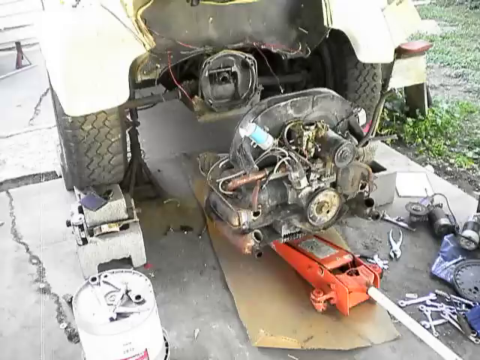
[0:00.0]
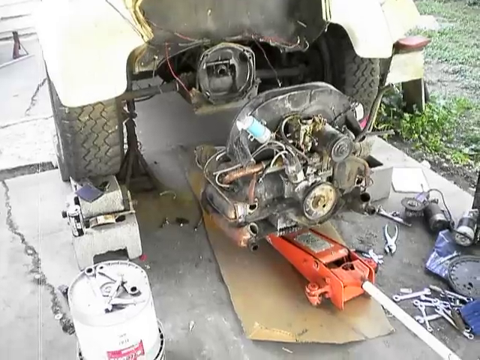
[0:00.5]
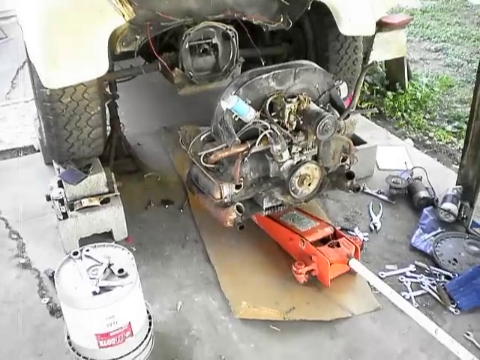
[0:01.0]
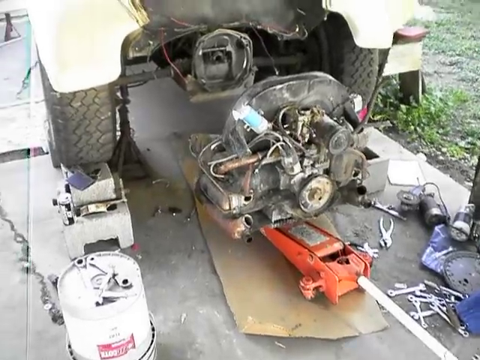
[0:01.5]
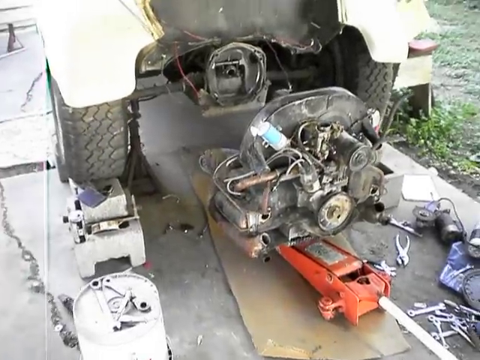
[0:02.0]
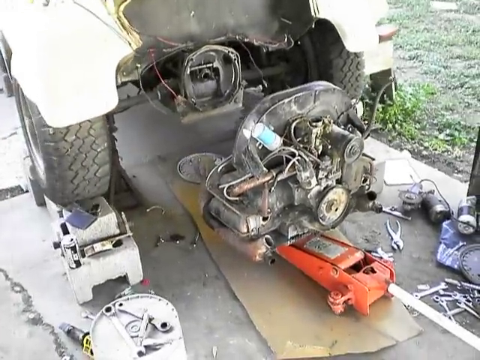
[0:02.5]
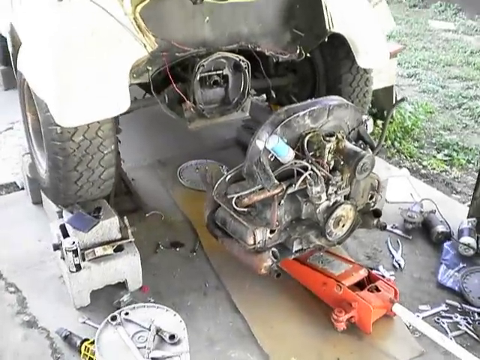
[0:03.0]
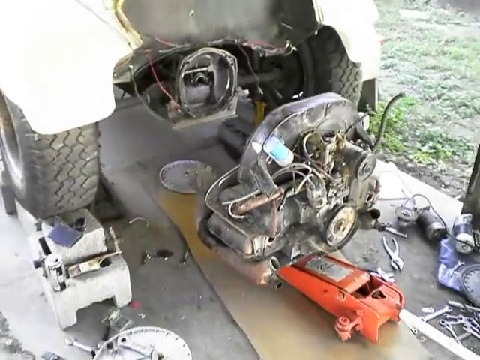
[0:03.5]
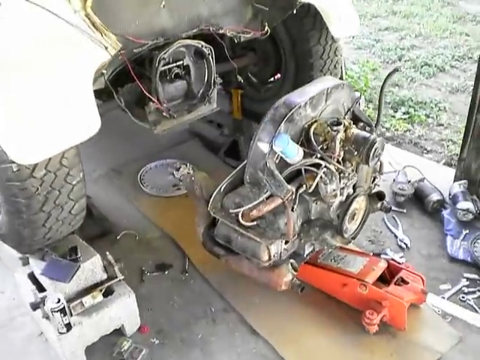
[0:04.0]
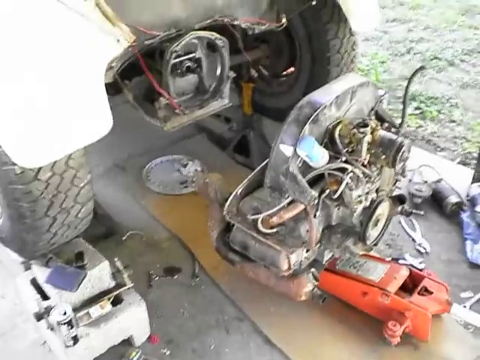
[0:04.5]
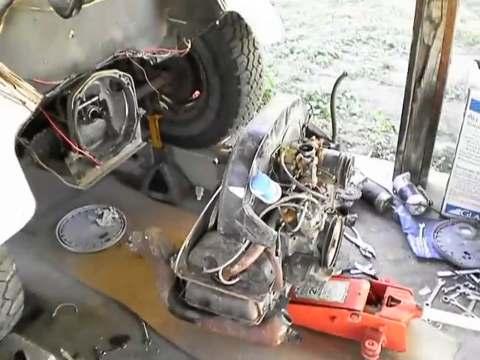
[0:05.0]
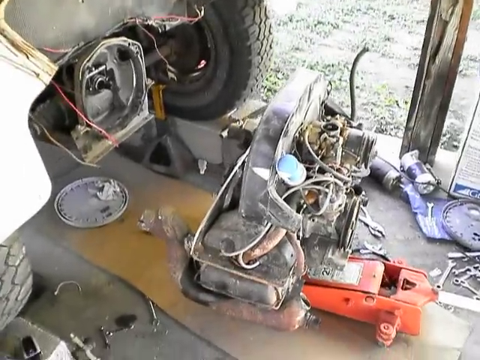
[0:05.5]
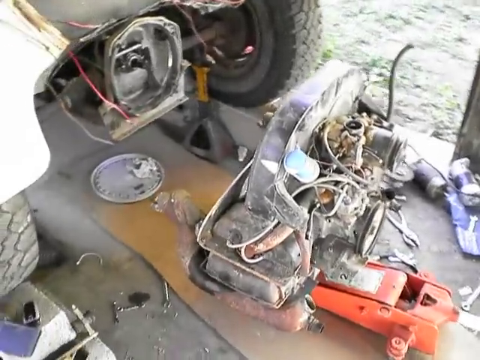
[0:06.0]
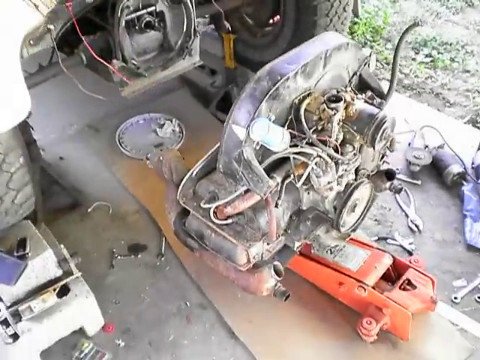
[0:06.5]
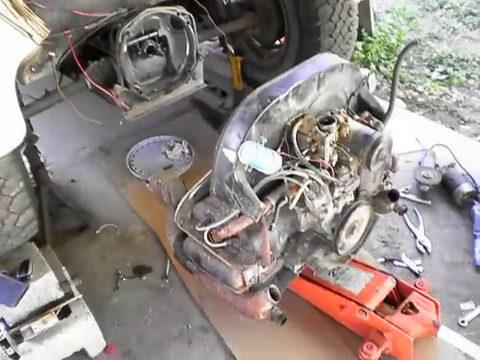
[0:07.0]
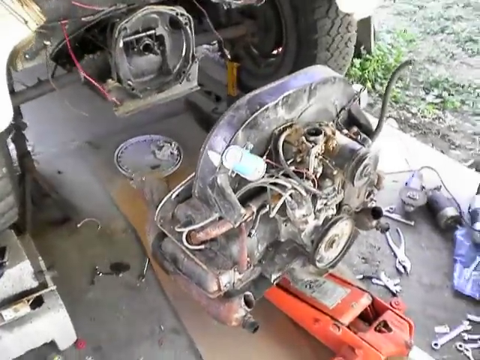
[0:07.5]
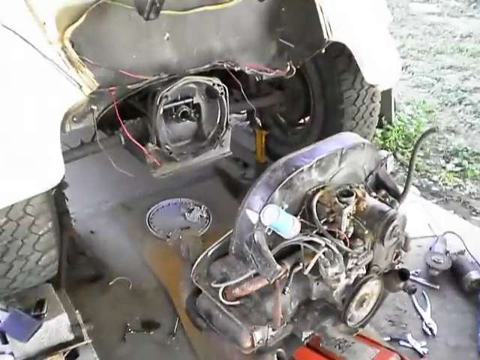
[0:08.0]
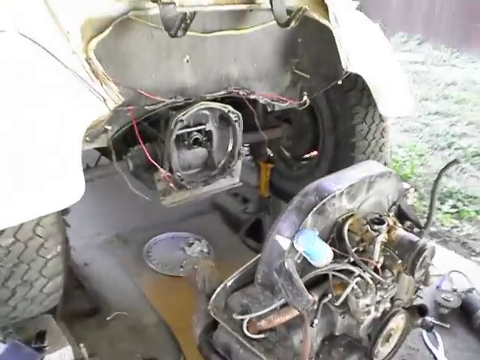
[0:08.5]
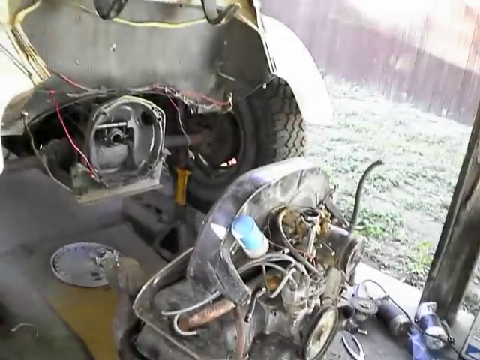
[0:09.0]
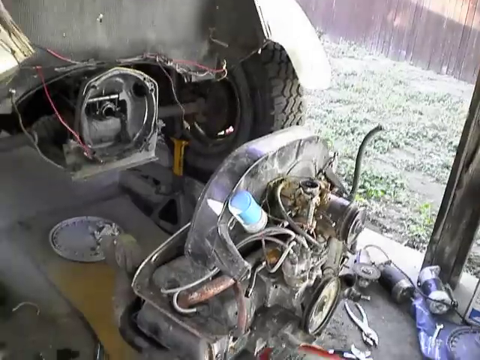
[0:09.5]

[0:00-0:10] Outdoors in daylight, someone is working on what looks like a motor, though it is hard to tell. The shot is blurry, showing an old part and a lot of equipment, including a car jack. Someone is working on a car in their driveway; grass and pavement with cracks in it are visible. The image is kind of blurry overall.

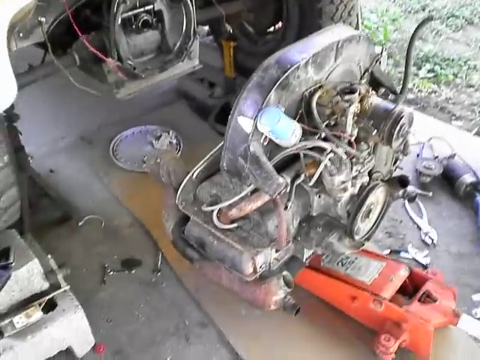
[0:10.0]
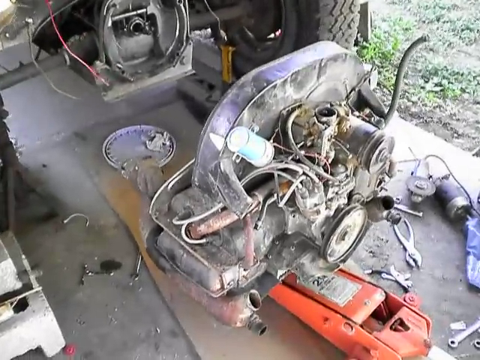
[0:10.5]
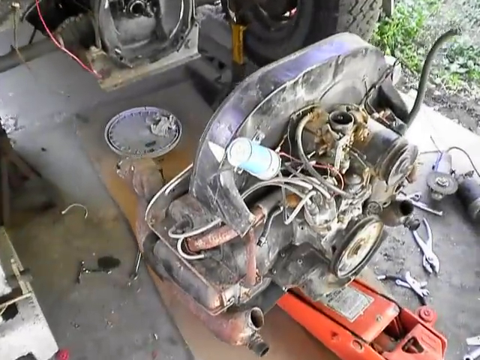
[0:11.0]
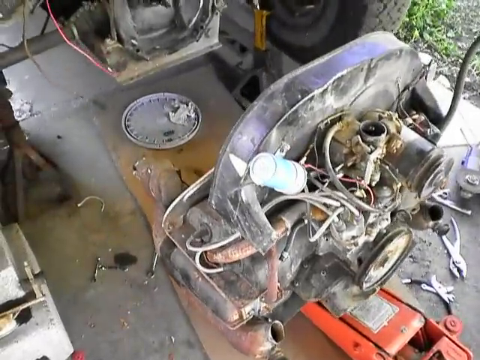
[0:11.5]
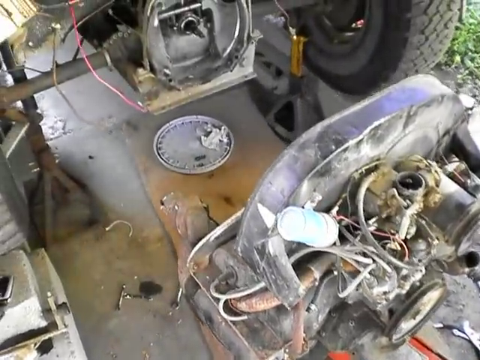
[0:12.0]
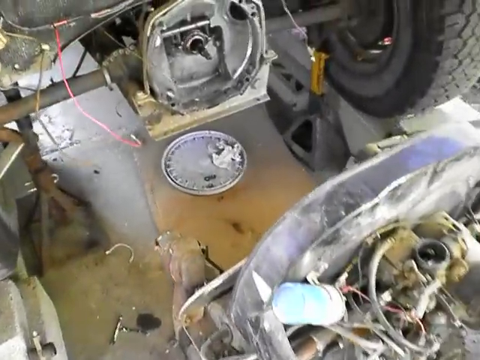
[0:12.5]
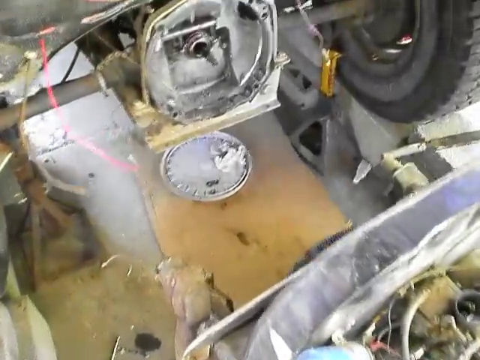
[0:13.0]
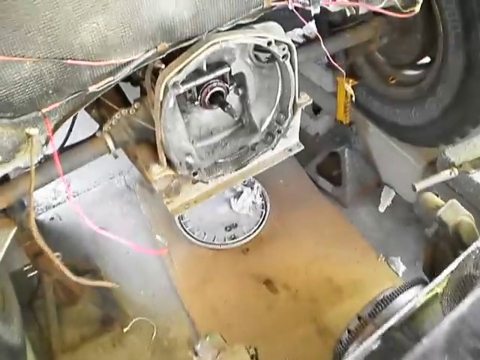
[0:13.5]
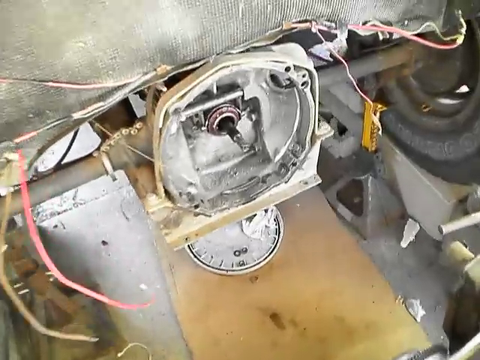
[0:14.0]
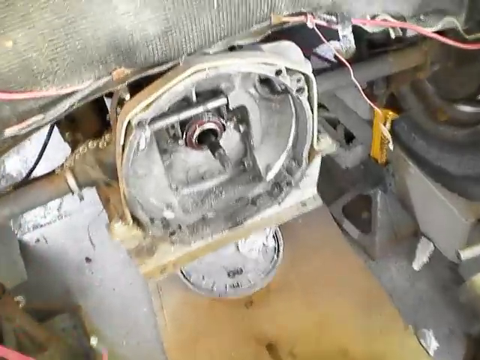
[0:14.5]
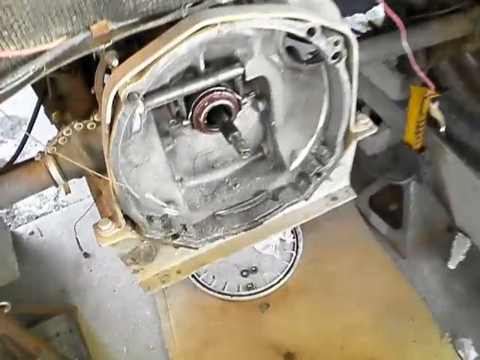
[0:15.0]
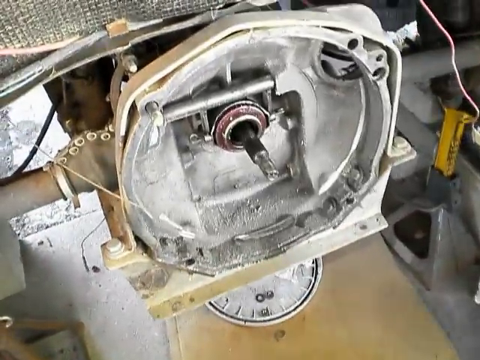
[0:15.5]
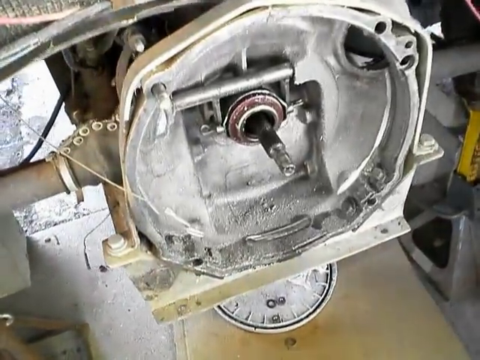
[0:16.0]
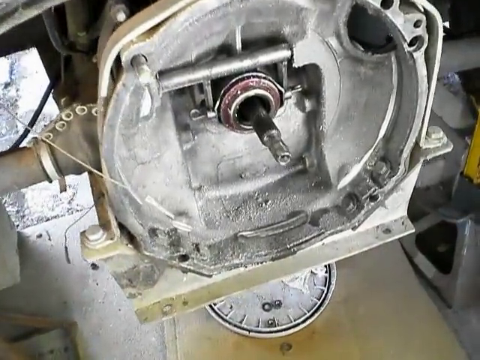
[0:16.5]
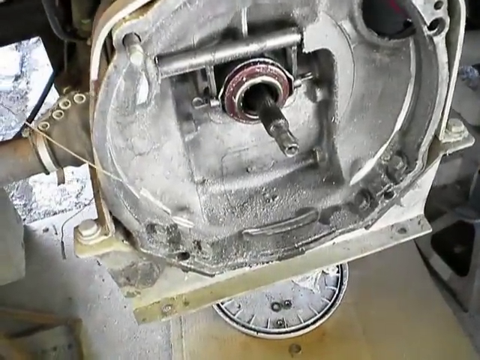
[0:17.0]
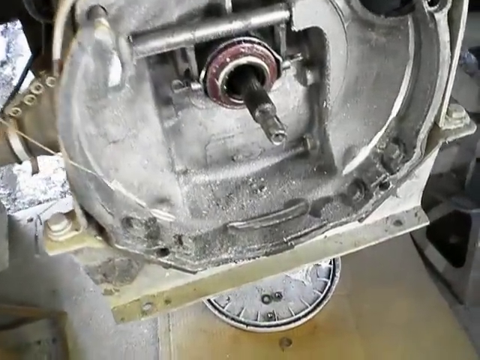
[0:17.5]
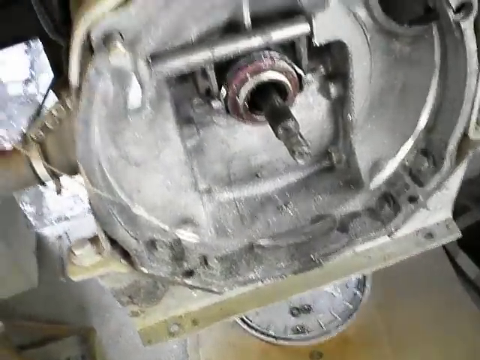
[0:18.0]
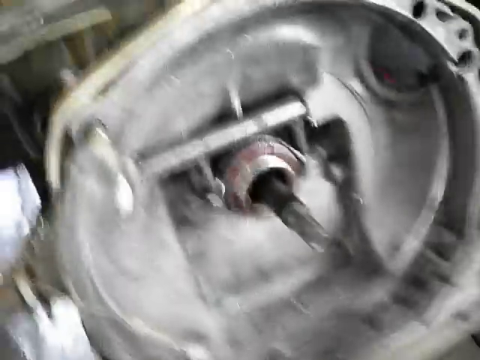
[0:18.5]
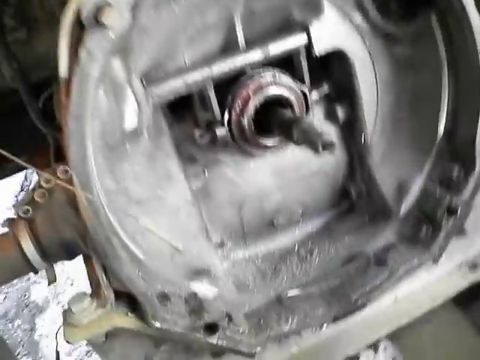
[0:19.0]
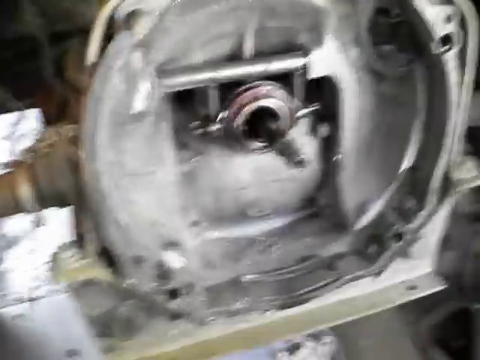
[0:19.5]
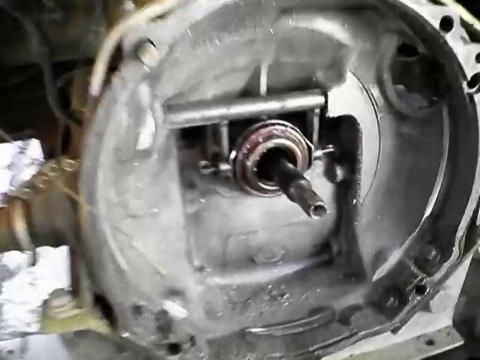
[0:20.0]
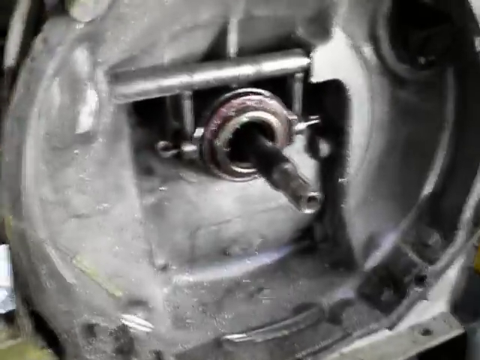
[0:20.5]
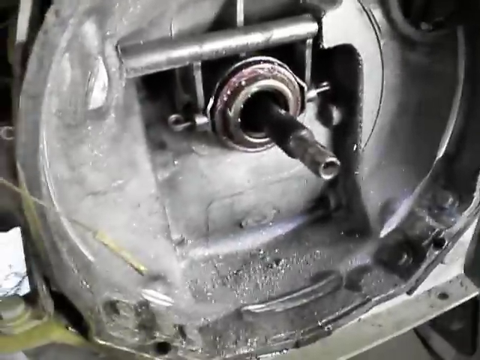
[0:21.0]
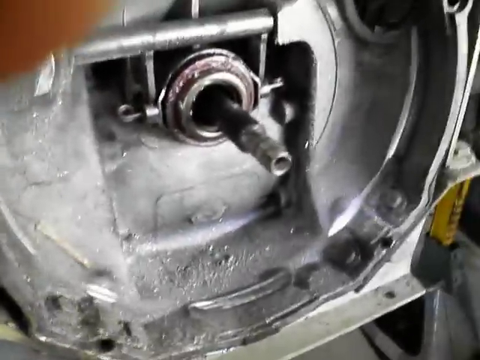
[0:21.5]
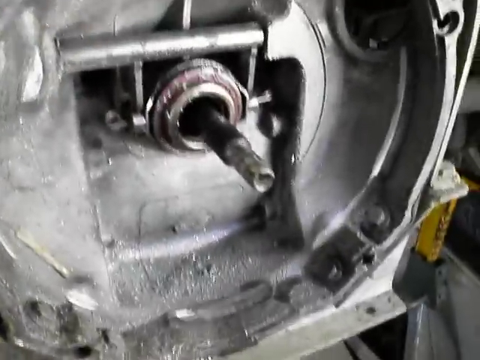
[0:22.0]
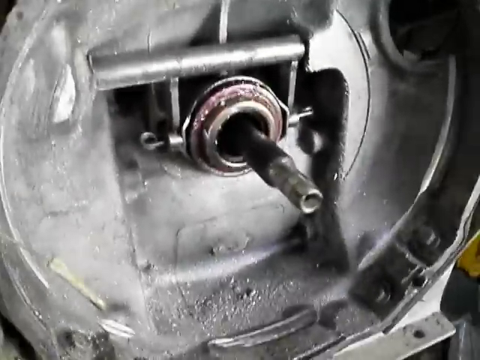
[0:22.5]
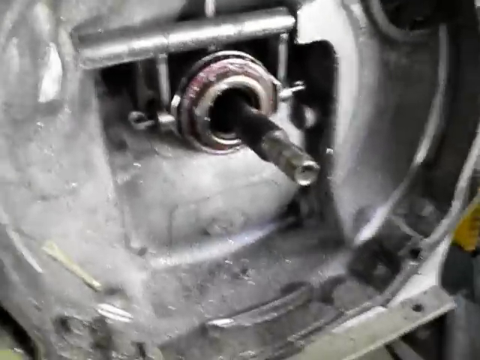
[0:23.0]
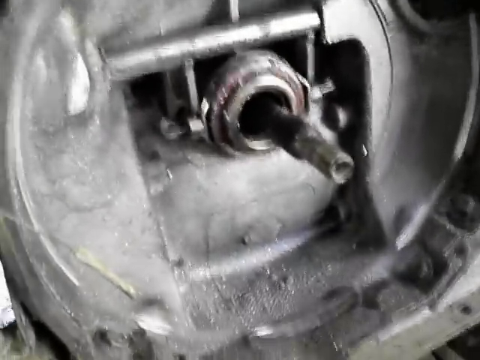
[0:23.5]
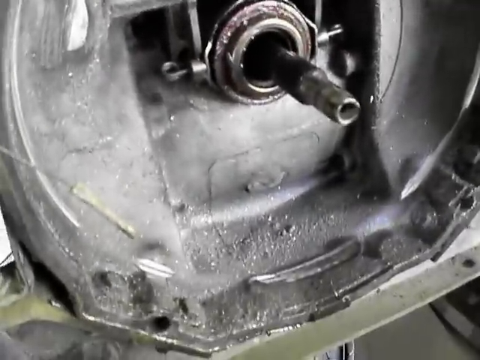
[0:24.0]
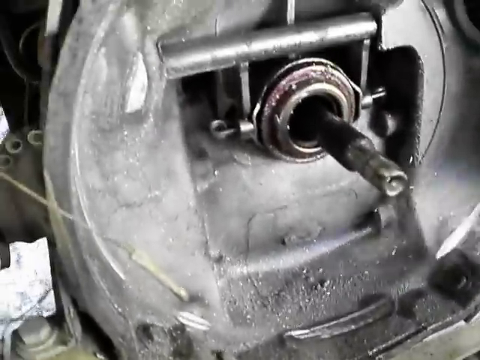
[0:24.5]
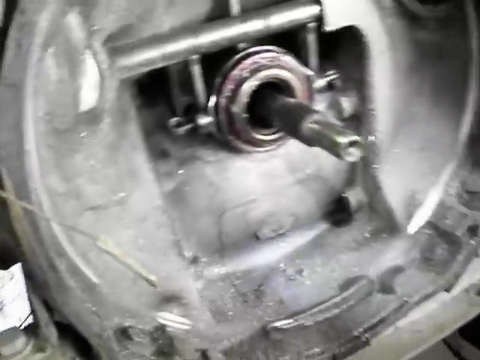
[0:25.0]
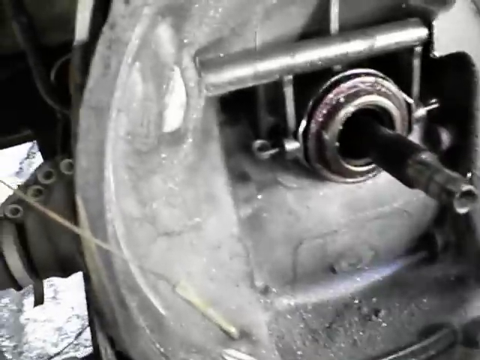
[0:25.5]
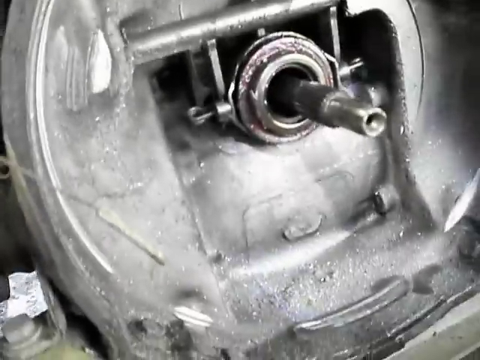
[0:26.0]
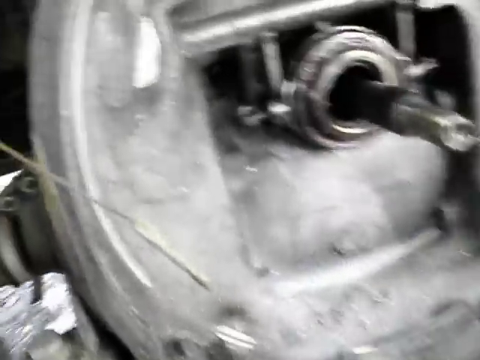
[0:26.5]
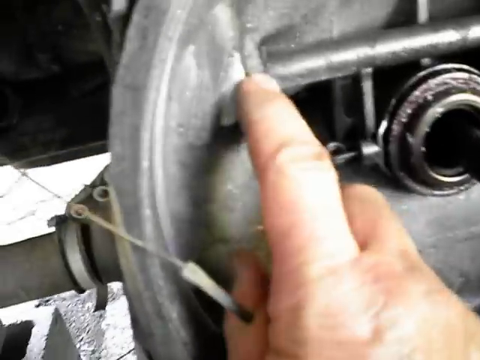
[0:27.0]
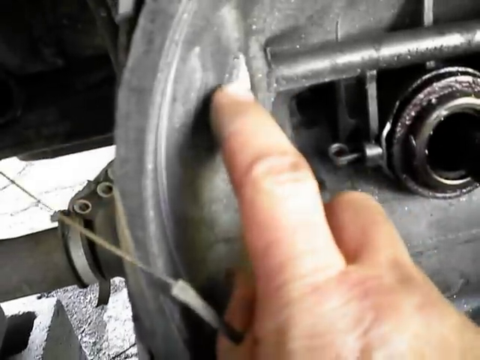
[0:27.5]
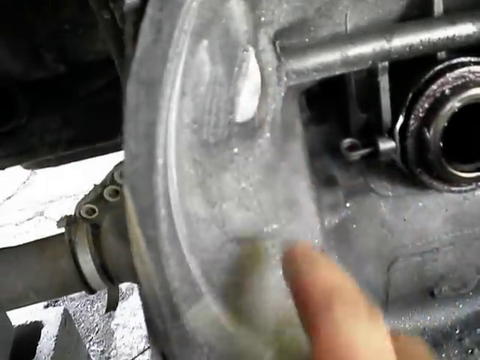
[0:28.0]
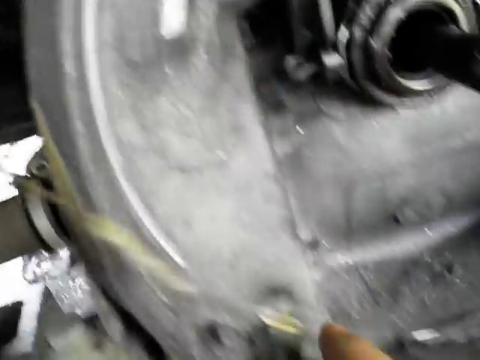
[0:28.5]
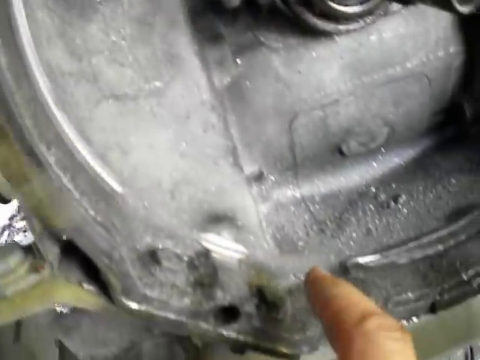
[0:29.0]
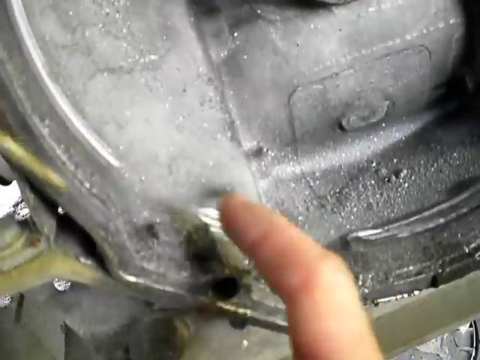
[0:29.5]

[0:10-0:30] Someone appears to be working on a car in their driveway, seemingly on the motor or something similar. A car jack, a car, grass, sunlight and cracked pavement are visible, along with a lot of wires and many silver parts. The camera zooms into the back of the vehicle, showing something like a little rod, and parts of a hand, apparently a Caucasian hand, come into view. The camera zooms in very close as the person points at something inside a silver cylinder. Tools such as wrenches are on the ground, and green grass and bright sunlight show that it is daytime.